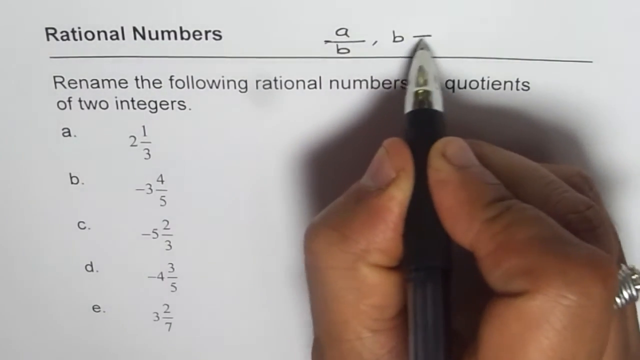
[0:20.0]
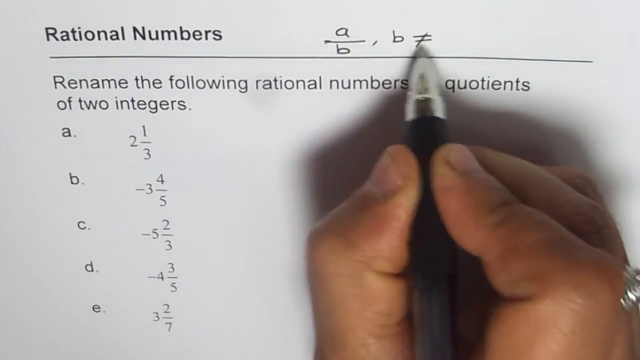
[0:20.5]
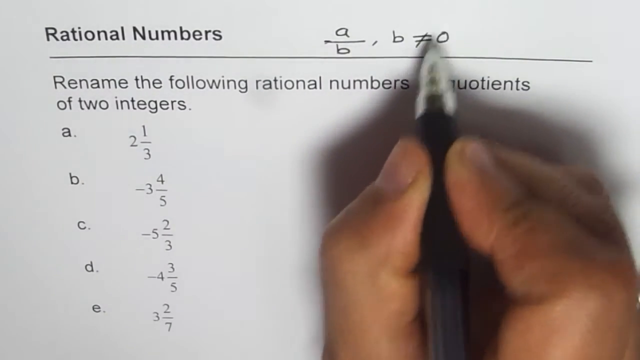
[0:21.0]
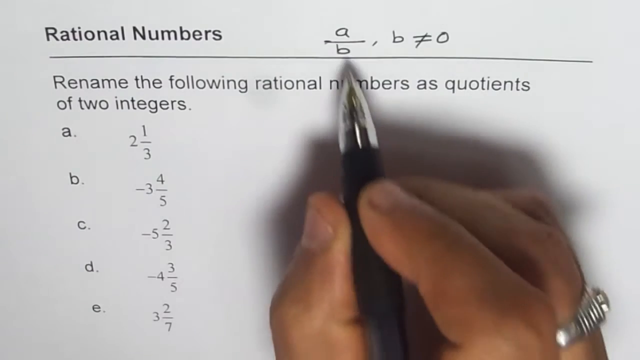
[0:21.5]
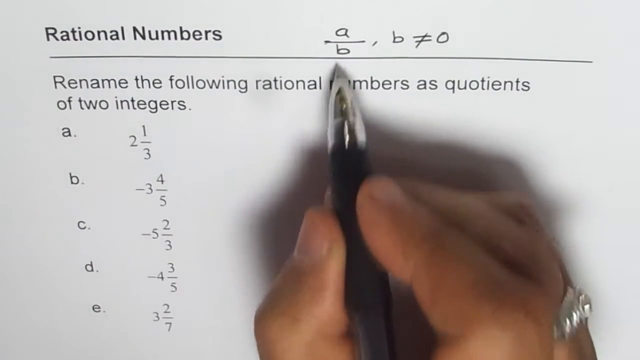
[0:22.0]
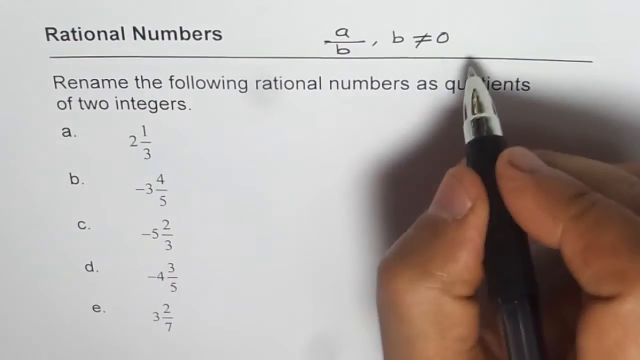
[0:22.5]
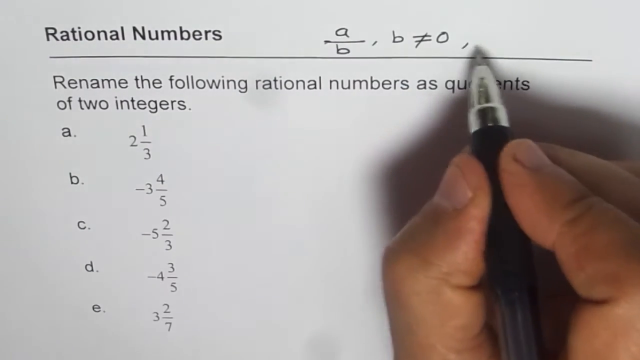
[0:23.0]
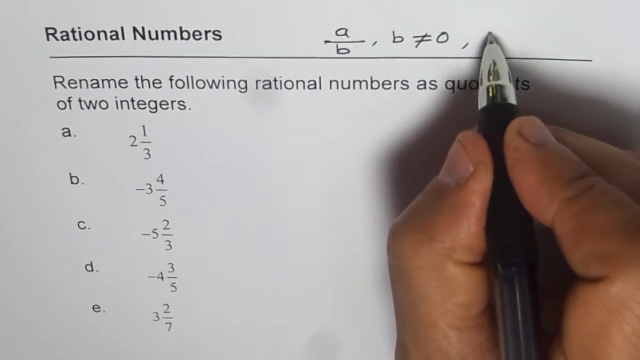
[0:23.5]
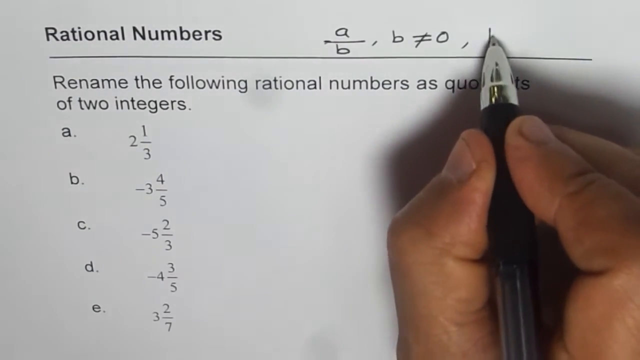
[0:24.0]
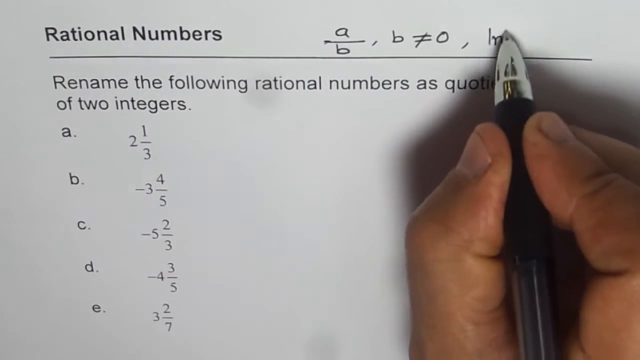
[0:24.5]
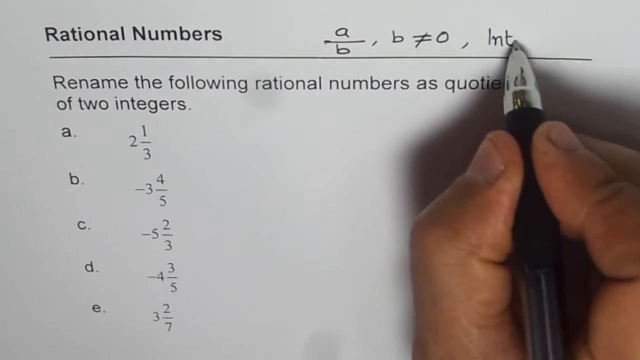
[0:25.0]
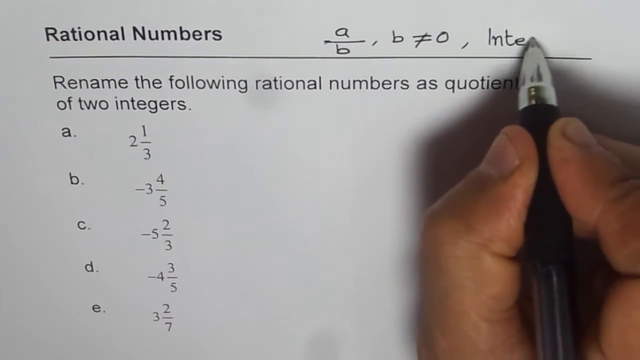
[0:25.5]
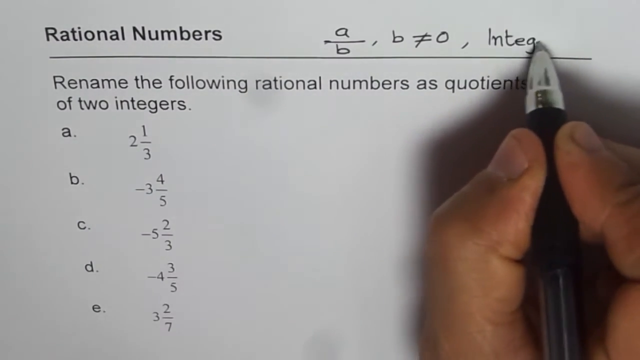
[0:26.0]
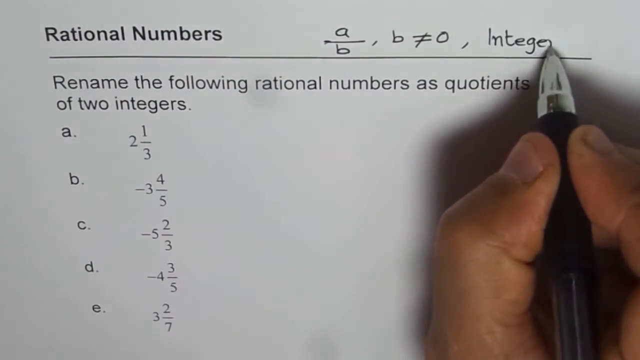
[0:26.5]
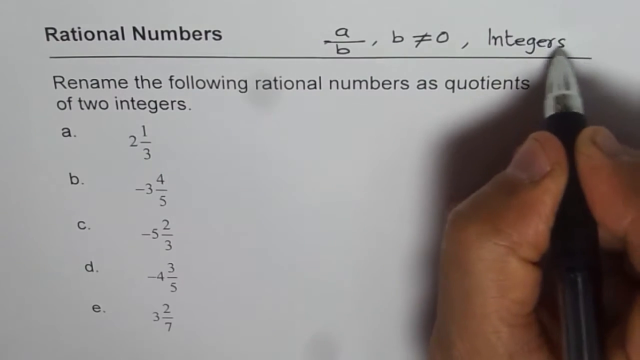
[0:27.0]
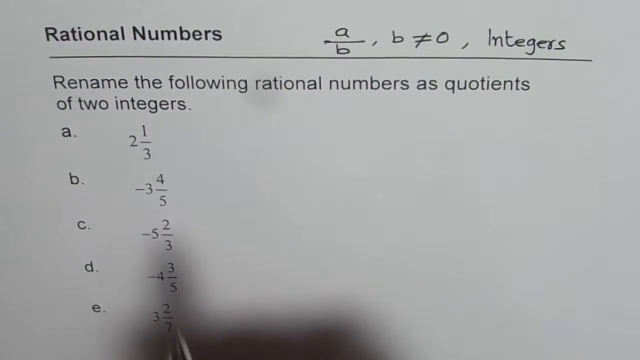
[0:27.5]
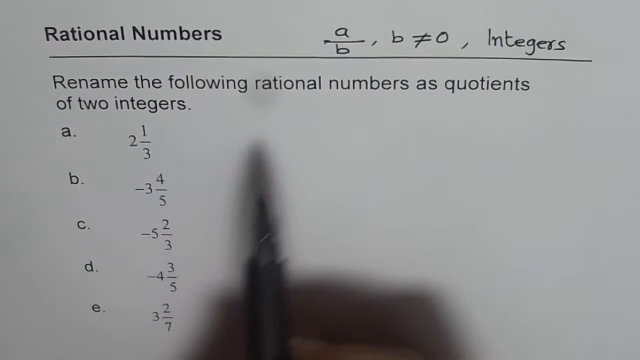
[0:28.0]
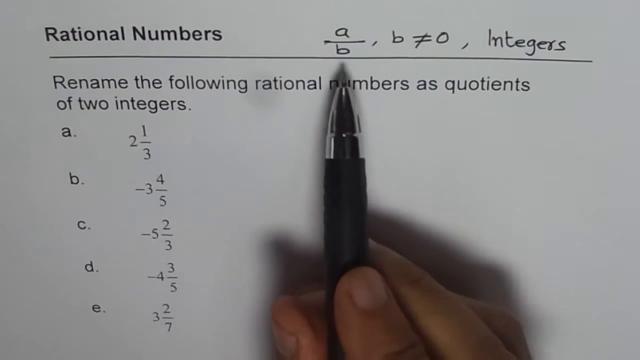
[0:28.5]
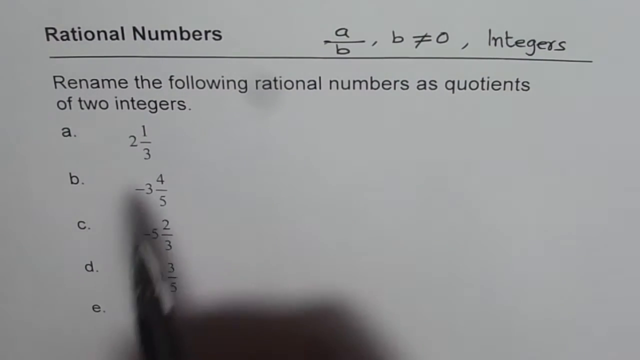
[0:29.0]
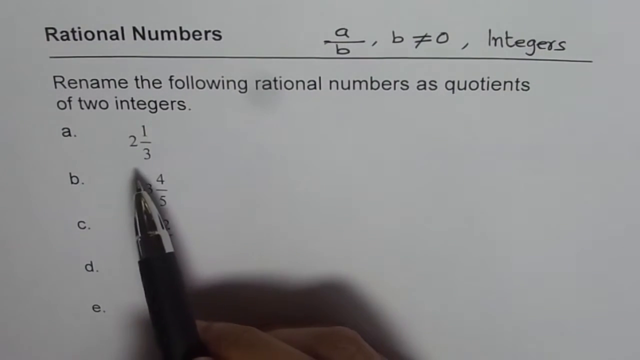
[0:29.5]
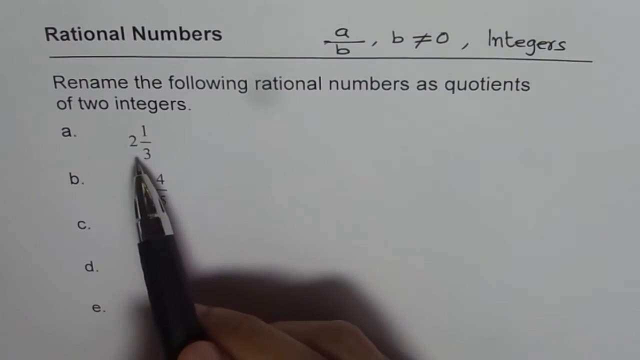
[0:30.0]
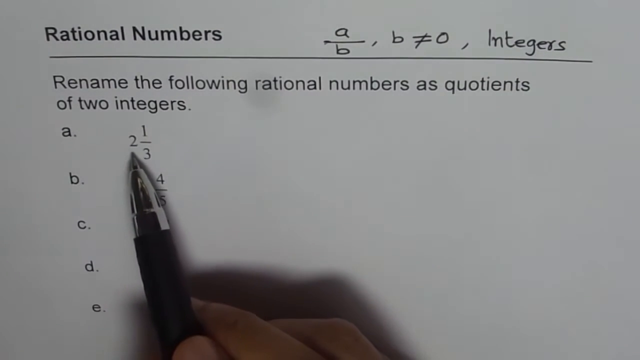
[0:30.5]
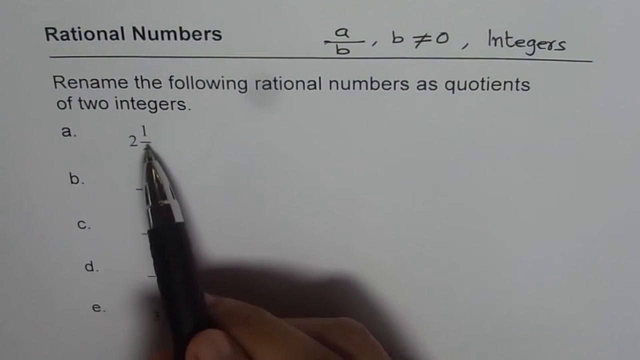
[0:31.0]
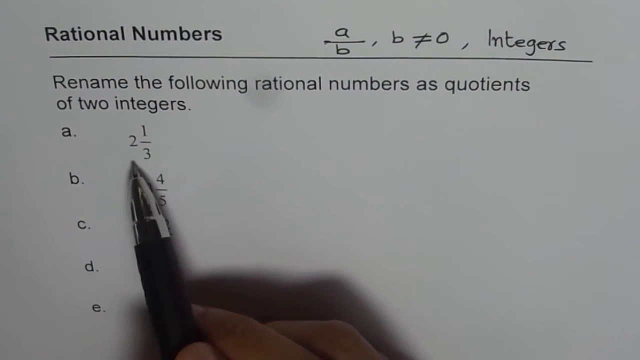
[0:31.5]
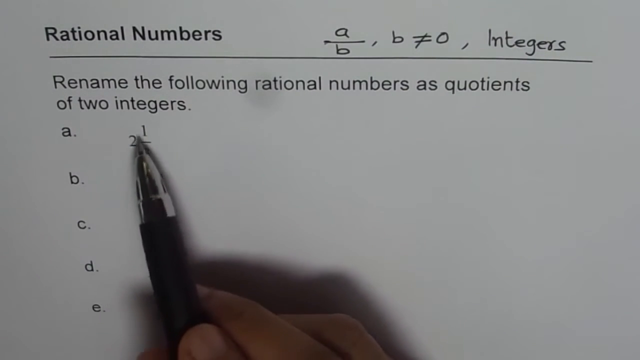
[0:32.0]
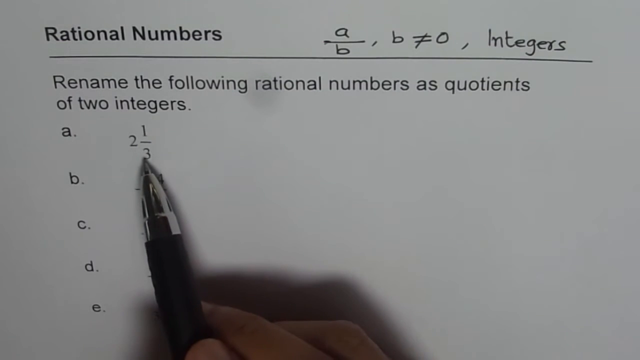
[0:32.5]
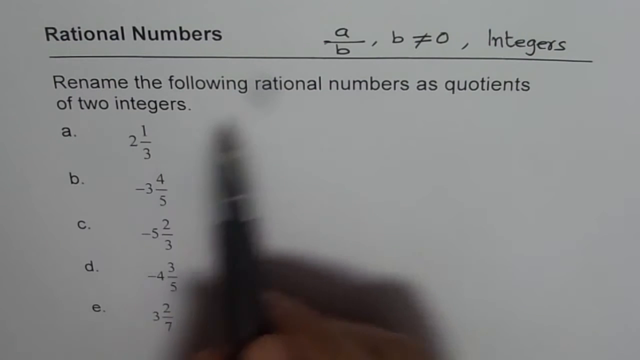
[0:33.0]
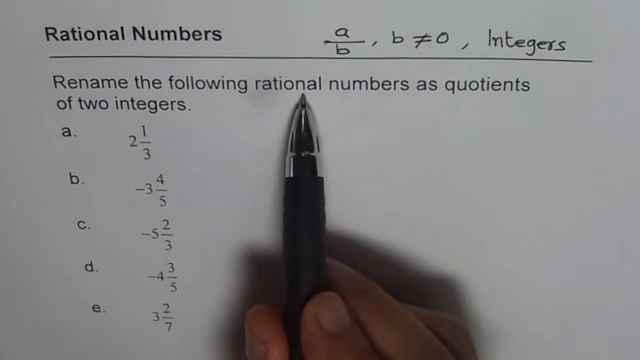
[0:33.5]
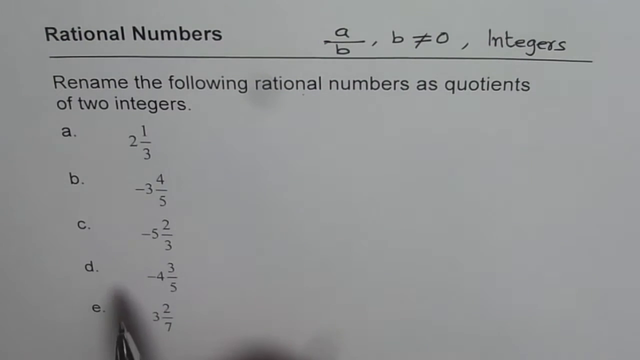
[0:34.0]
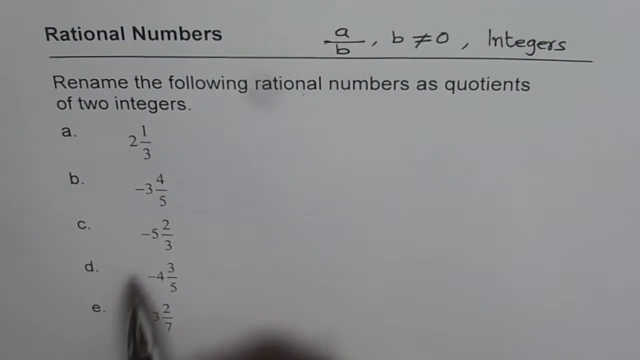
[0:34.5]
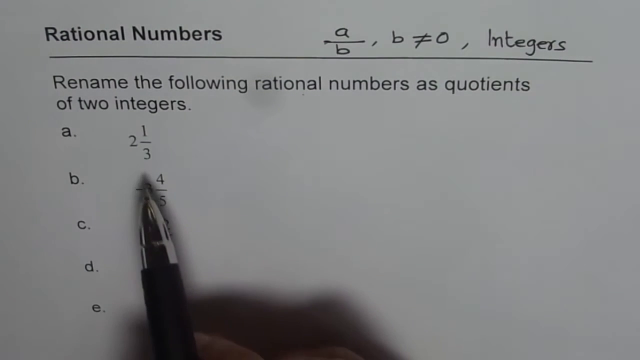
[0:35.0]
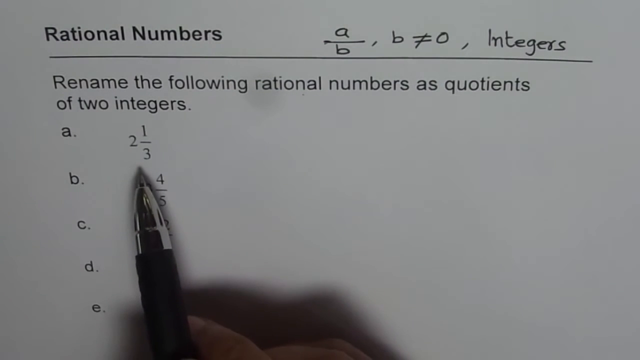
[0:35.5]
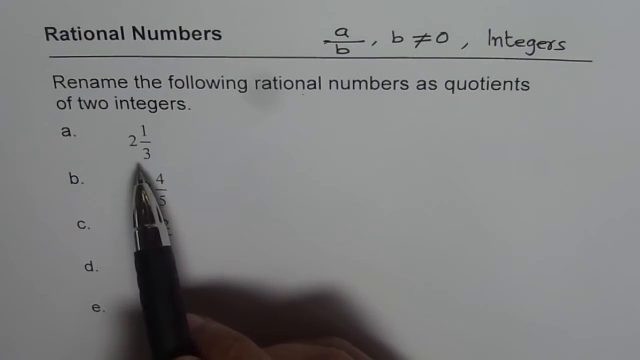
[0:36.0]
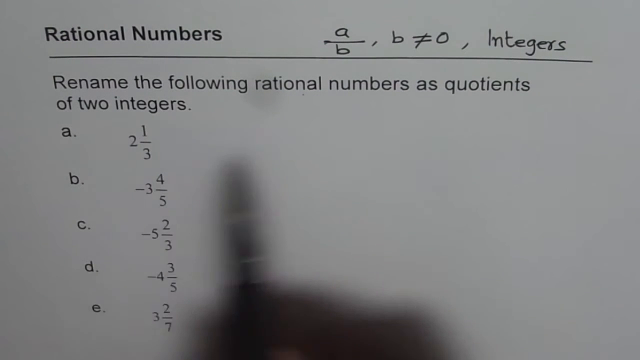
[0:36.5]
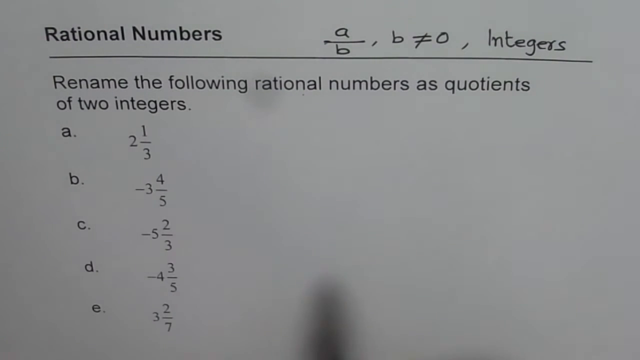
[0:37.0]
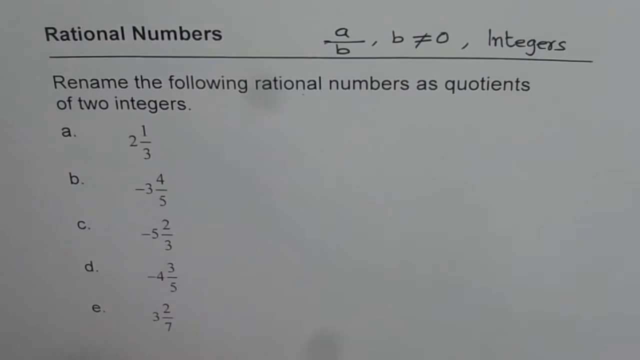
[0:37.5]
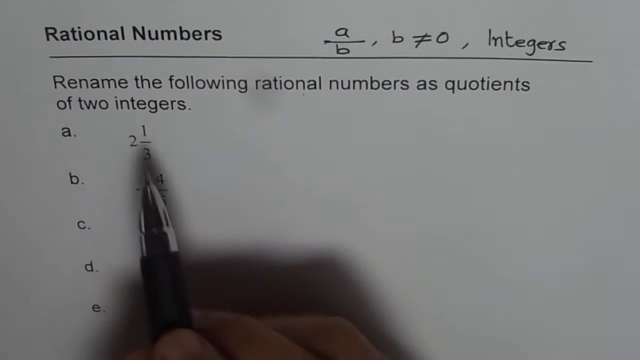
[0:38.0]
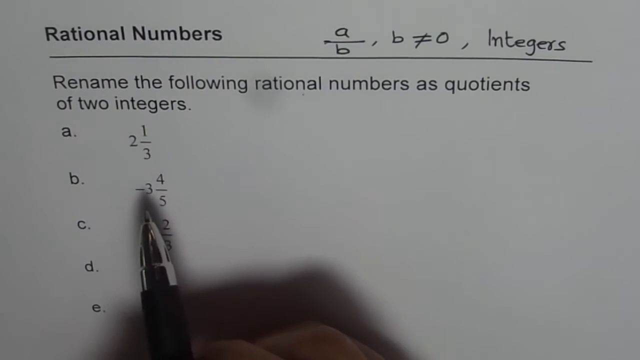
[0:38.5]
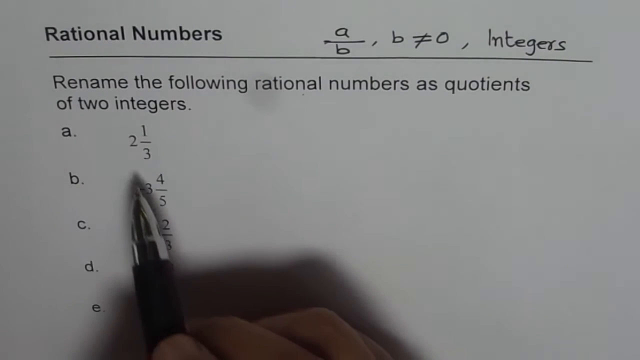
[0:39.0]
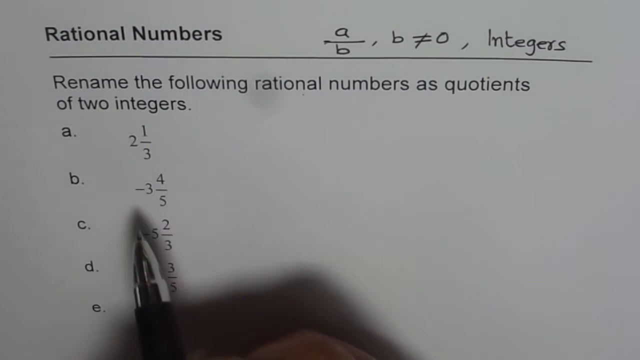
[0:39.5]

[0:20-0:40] The hand holding the pen finishes writing, so that the line reads "A/5, B" followed by an equals sign with a line through it, then "0, integers." The pen points to the "A/5" that was written, then moves down to option A, briefly makes a circle over it, and points at the word "rational." It then points to the word "quotients" in the typed question, and the hand makes a motion toward the -3 in option B. The person holding the pen appears to be walking through how the question can be answered, breaking down the steps. The person has a dark skin tone, wears a large diamond ring, and has short nails with no polish.